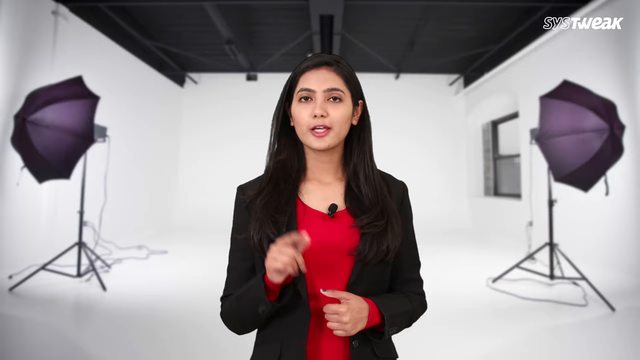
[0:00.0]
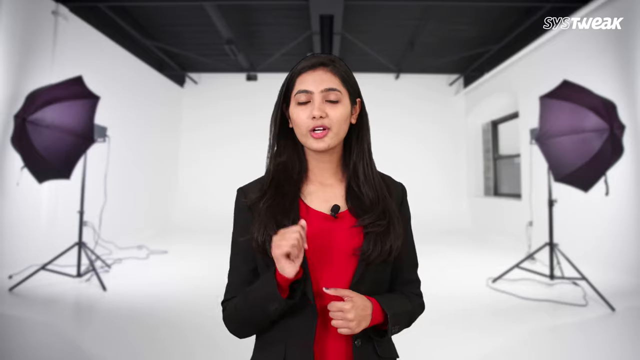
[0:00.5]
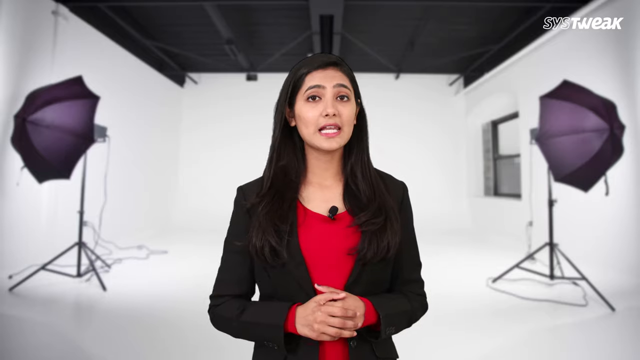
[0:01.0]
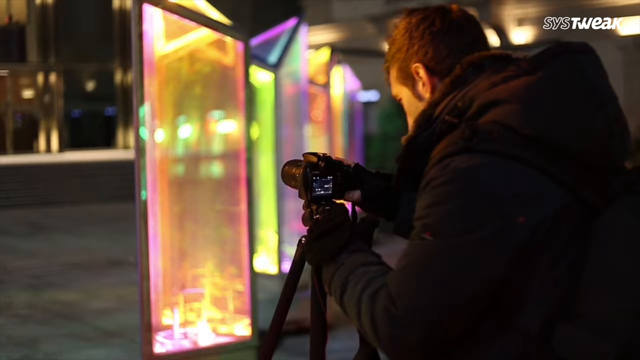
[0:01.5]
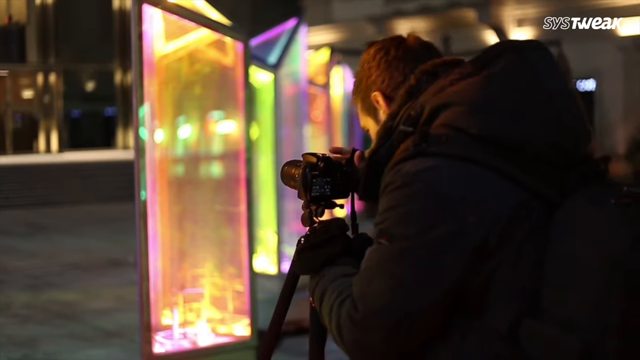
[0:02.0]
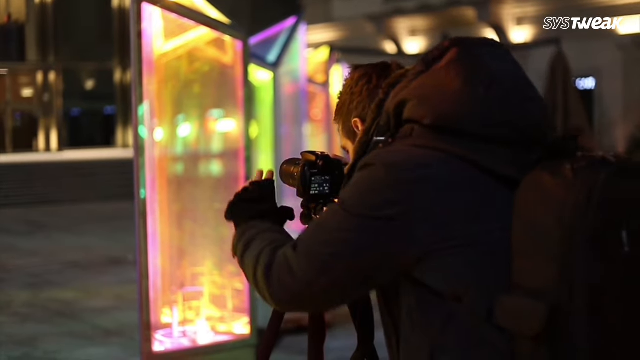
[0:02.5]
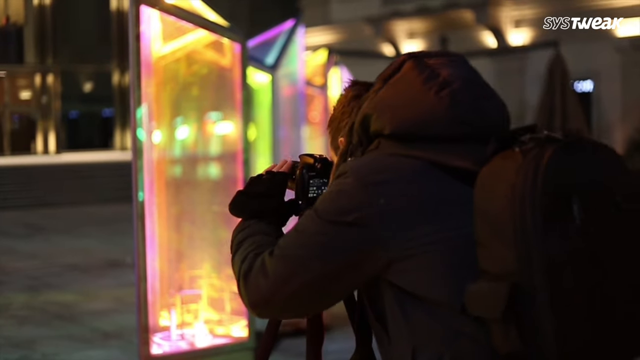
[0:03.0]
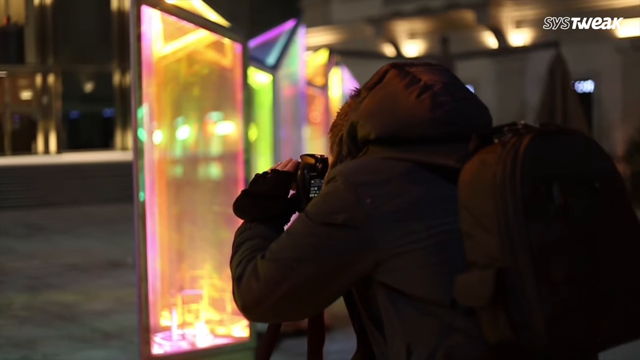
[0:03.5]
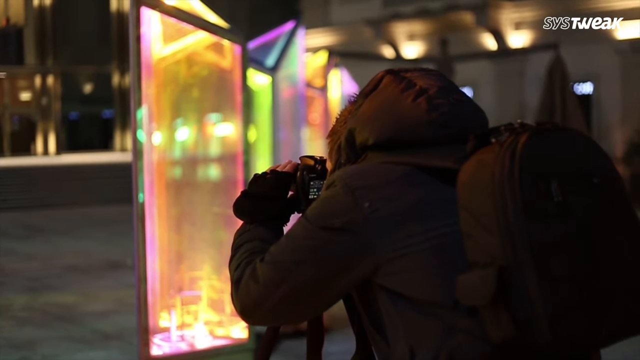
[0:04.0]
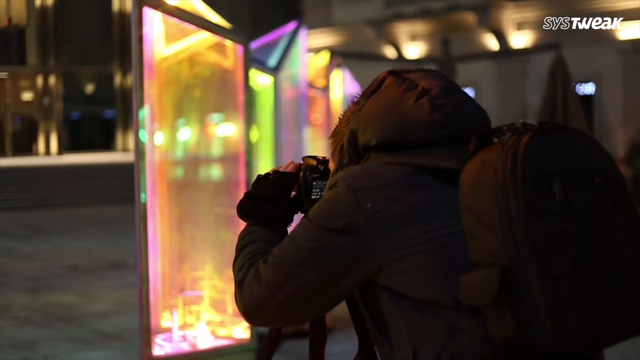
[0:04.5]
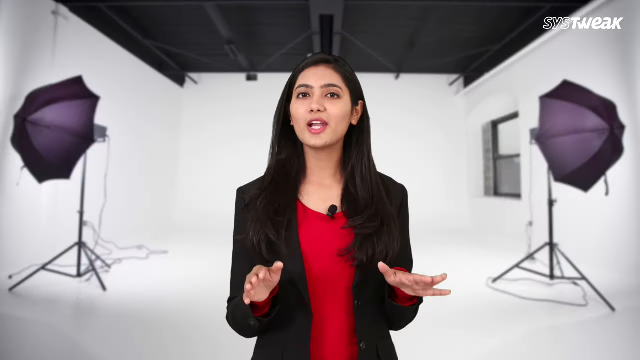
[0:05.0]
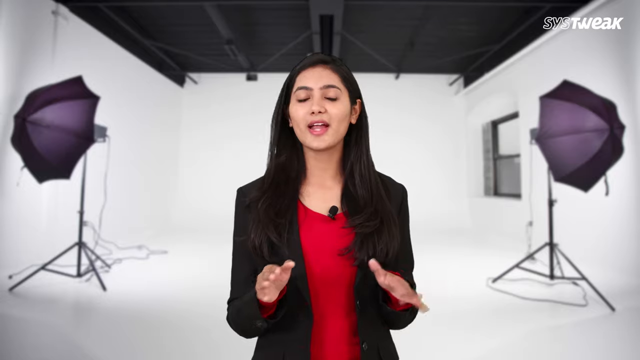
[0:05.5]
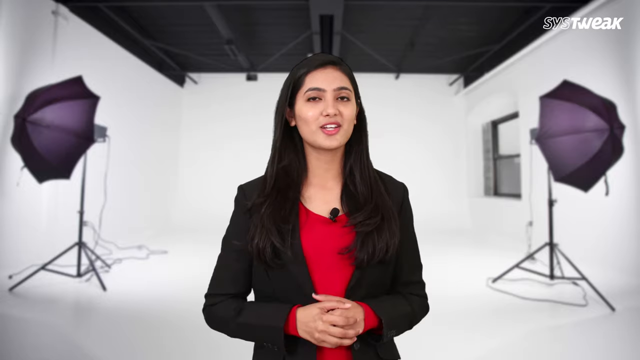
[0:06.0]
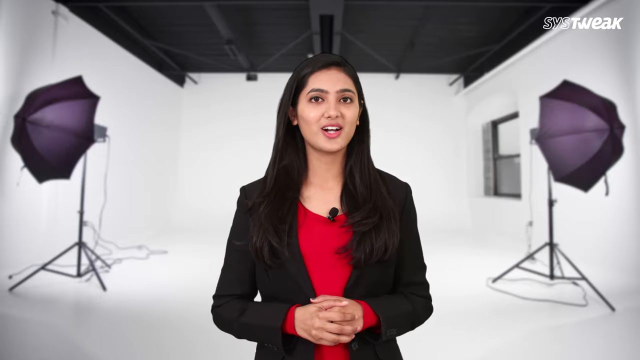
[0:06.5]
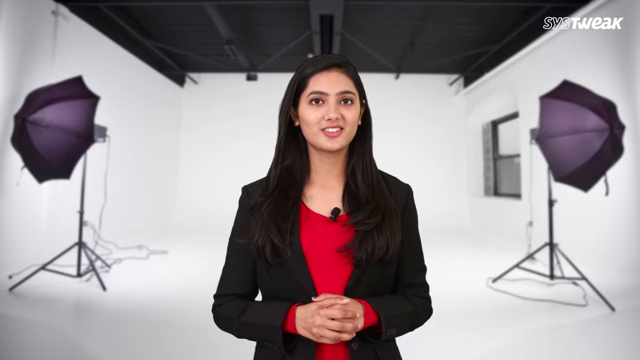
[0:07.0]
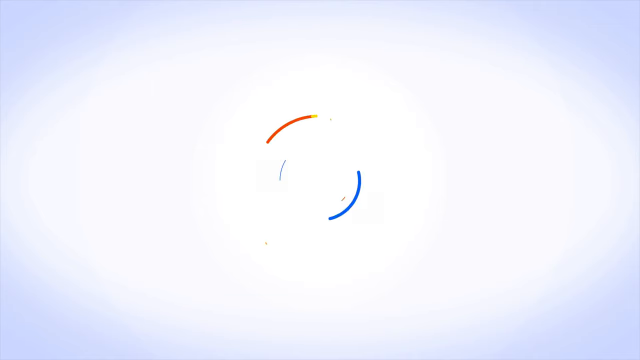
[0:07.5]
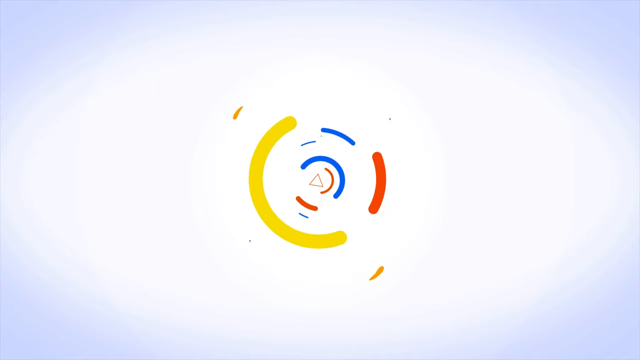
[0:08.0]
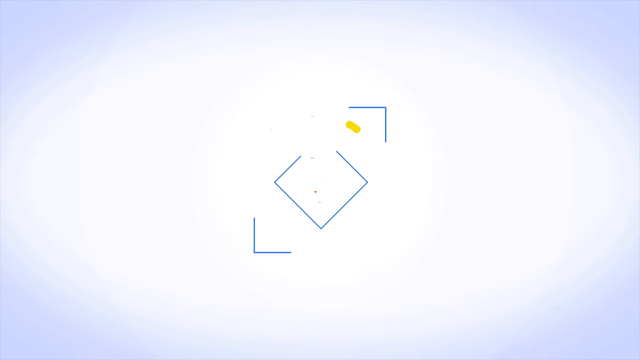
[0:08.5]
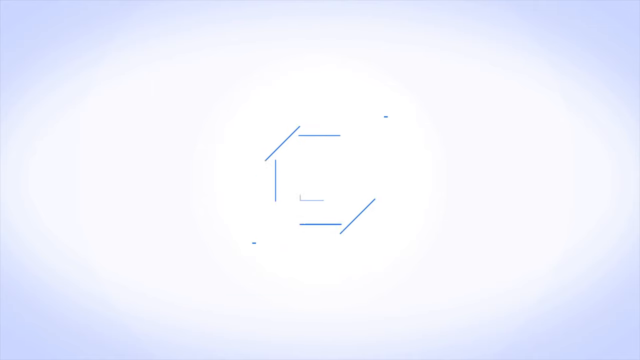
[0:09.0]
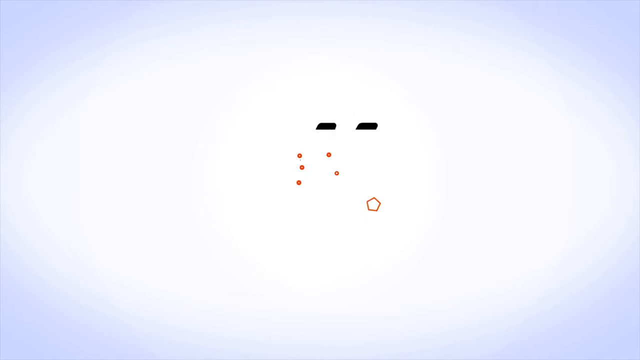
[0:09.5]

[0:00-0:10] A woman speaks into the camera. She wears a black sports coat with a red shirt underneath and has a microphone attached to her shirt. She is in a white room with two purple cameras. Next, a man in a winter coat is seen from a back and side profile; he has a camera on a tripod and is using it to take a picture of some type of cityscape. The woman in the black blazer and red shirt appears once more, and then a graphic enters the screen.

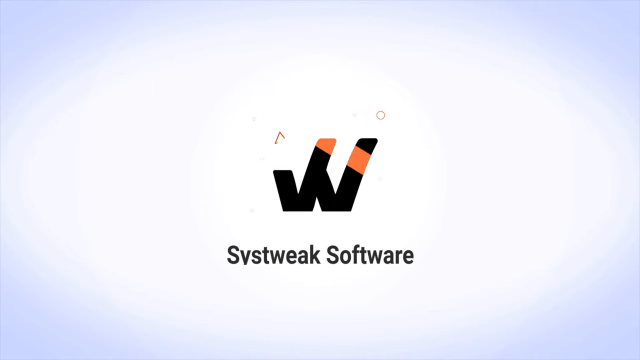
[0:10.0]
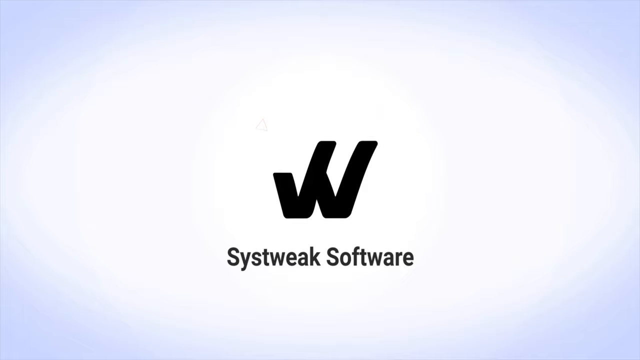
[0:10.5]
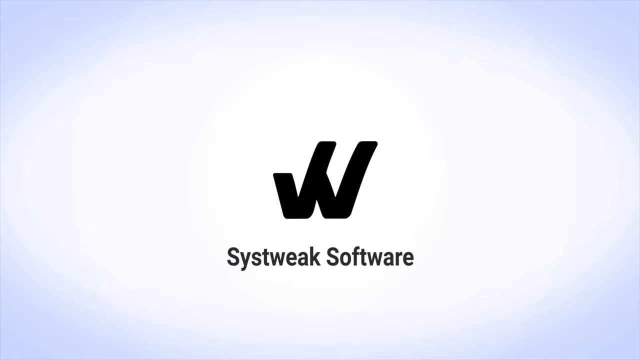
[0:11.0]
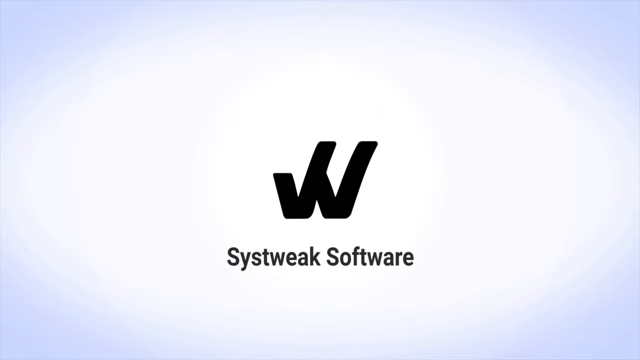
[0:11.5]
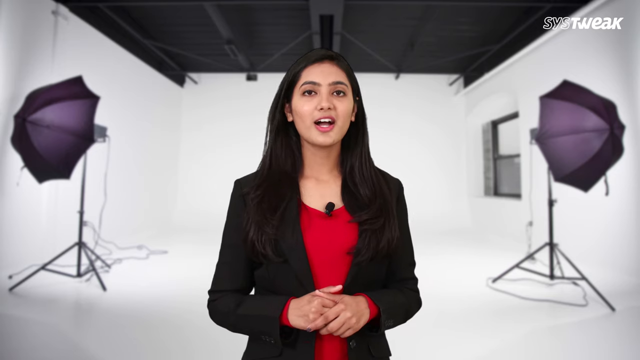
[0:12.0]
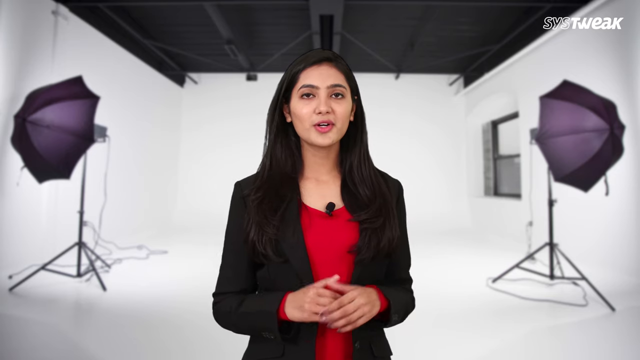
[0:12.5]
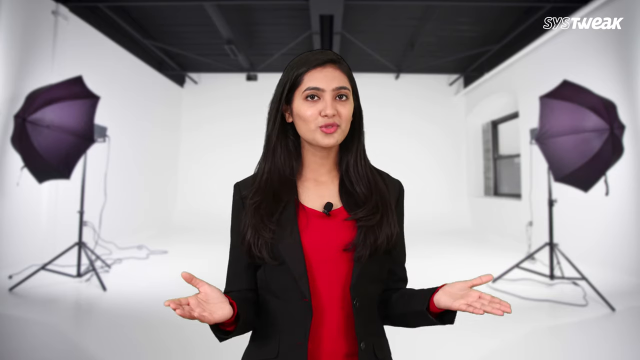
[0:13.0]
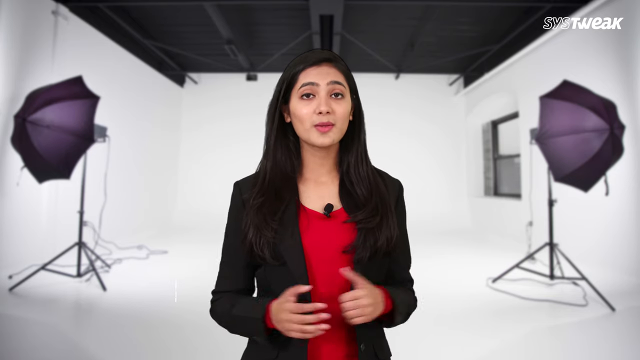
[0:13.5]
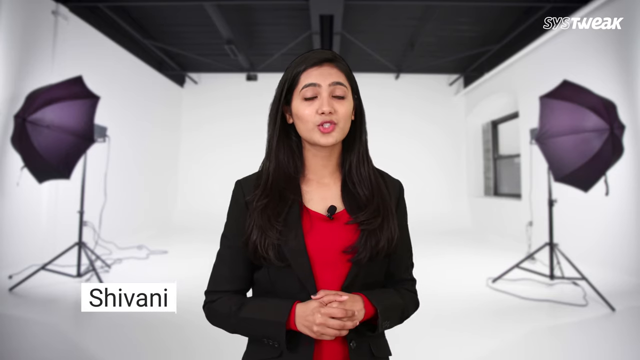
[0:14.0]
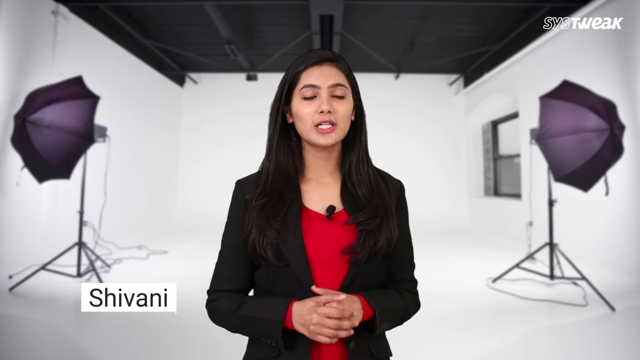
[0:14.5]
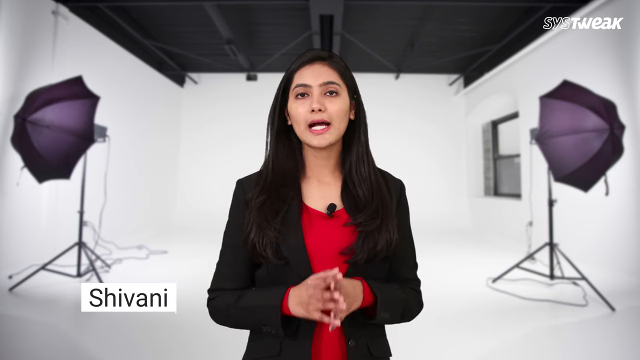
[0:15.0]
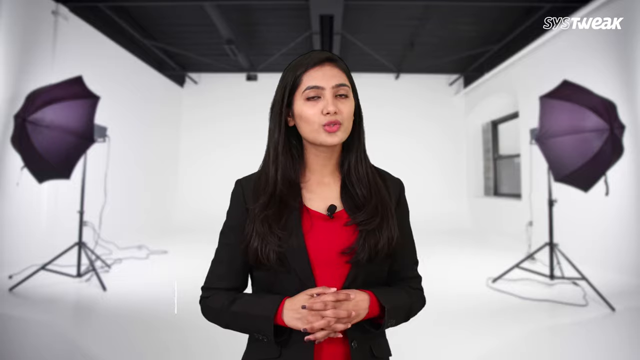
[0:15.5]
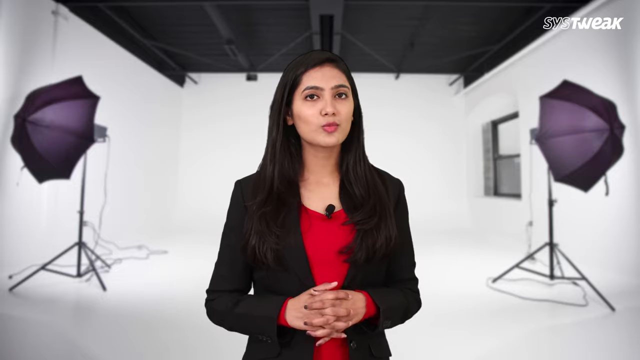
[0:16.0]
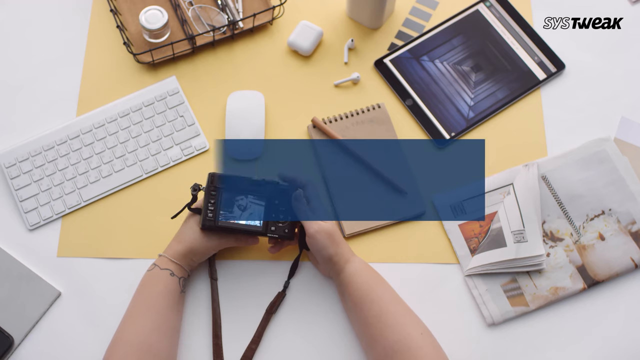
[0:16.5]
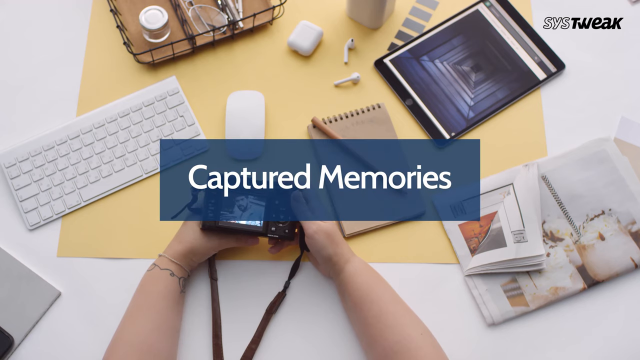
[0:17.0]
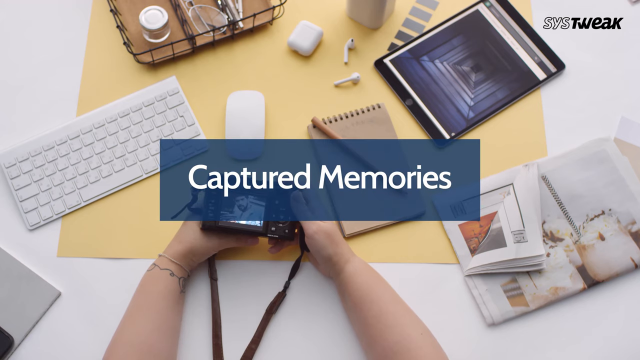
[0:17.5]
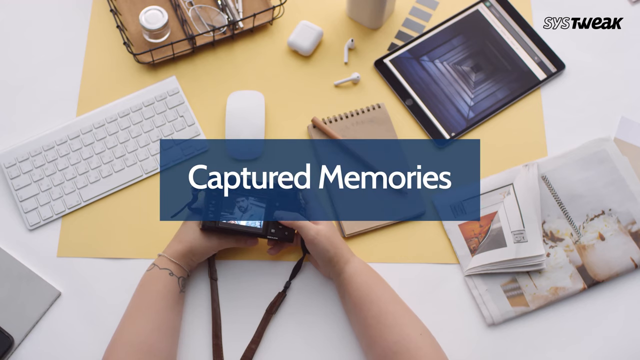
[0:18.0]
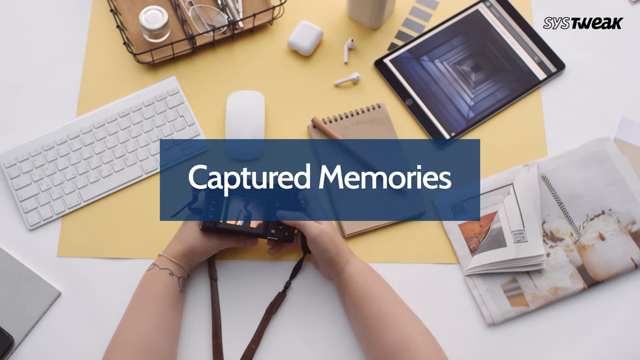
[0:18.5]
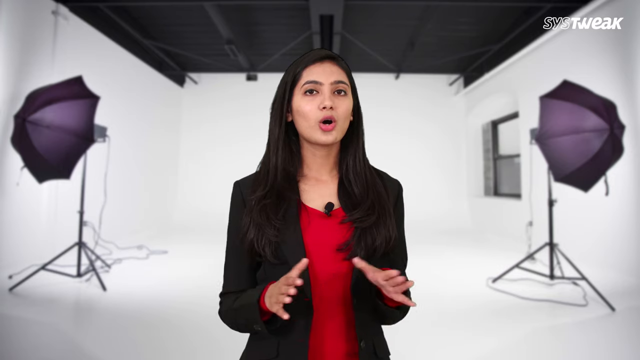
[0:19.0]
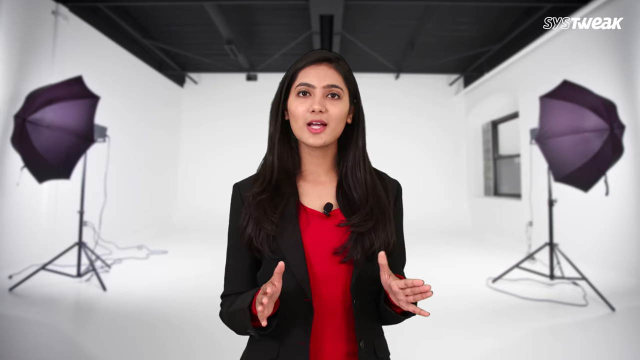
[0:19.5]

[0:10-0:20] A logo on the screen is a W with a break in its first part, so it looks kind of like two check marks right next to each other; the logo is called Systweak Software. The woman in the black sports coat and red shirt appears once more, speaking into the camera with her hands interlocked in front of her, and her name, "Shivani," appears on the screen. A shot follows of a person's hands operating a camera; they are looking into the camera as it lies on a desk that also holds a keyboard, a pencil, a notepad, a tablet and some other small items. The words "captured memories" appear on that shot. Then the woman in the black and red outfit is shown speaking into the camera once more.